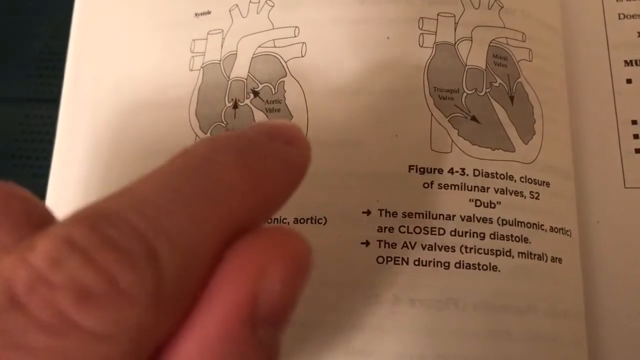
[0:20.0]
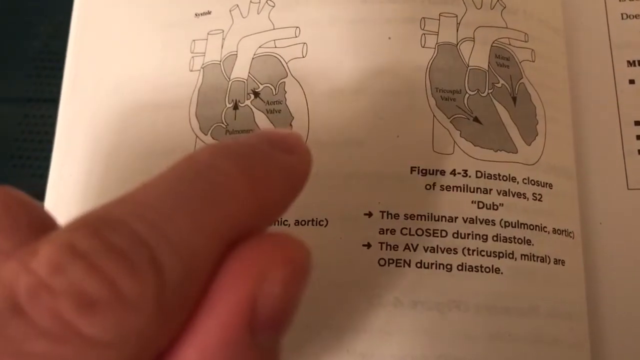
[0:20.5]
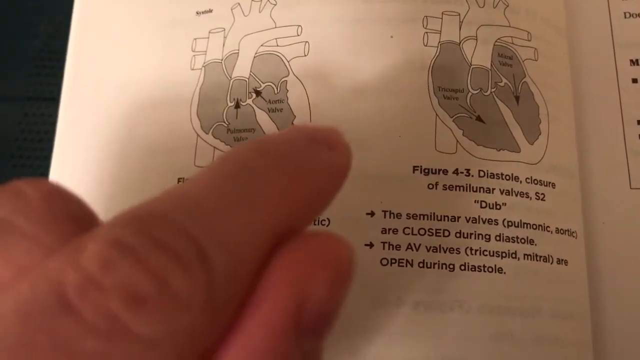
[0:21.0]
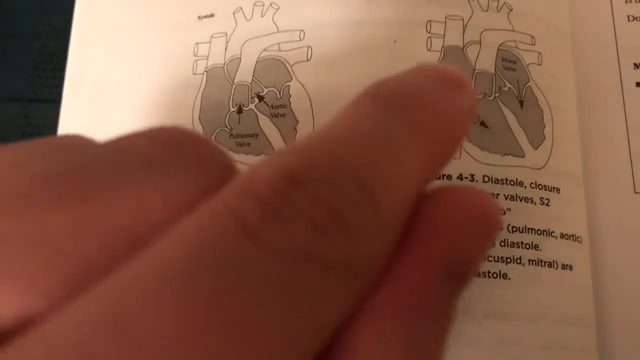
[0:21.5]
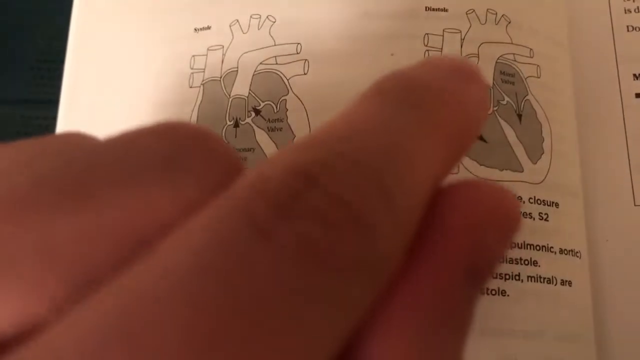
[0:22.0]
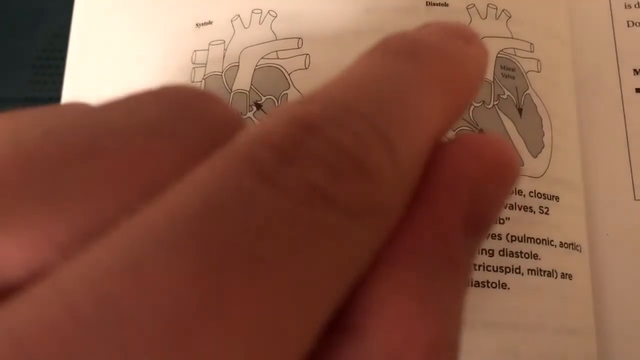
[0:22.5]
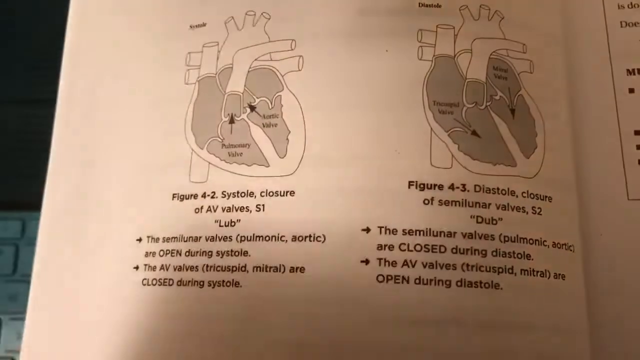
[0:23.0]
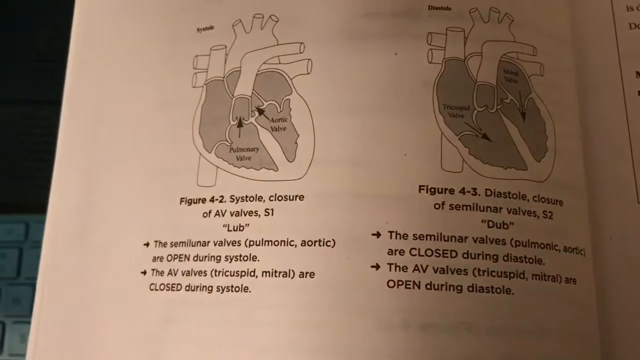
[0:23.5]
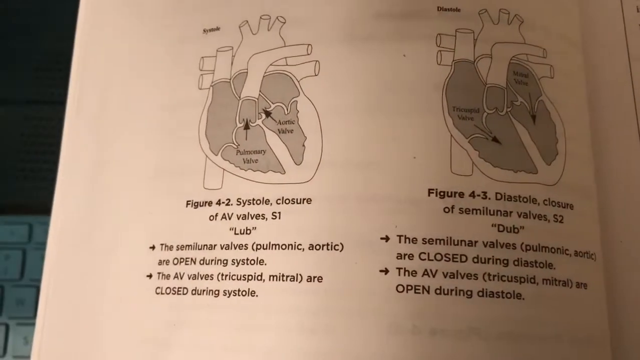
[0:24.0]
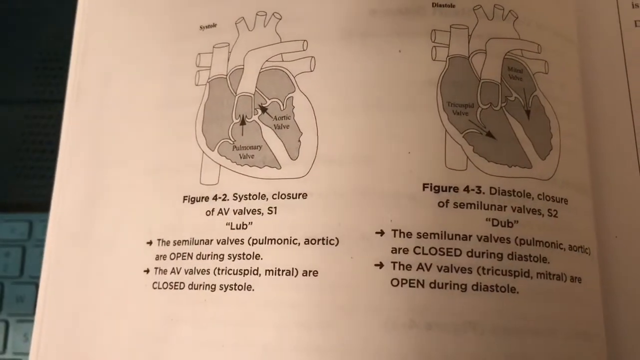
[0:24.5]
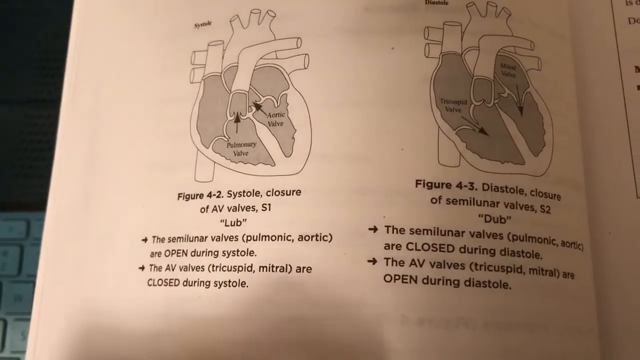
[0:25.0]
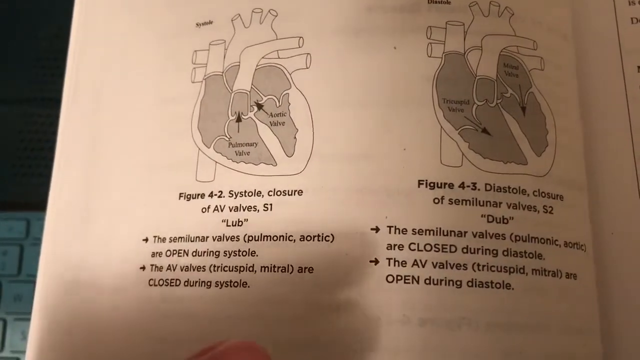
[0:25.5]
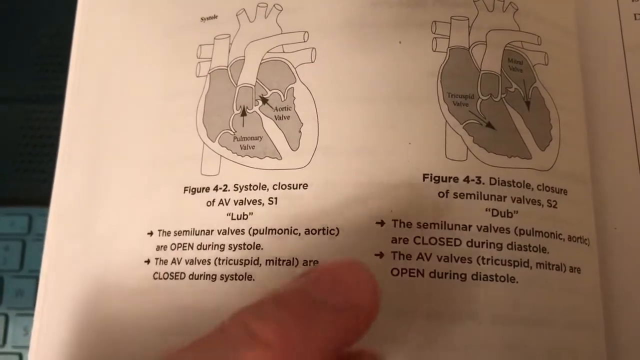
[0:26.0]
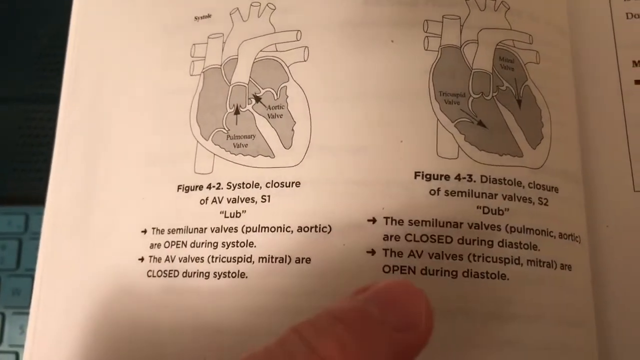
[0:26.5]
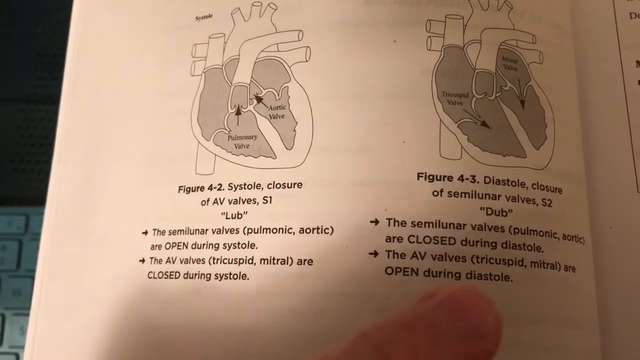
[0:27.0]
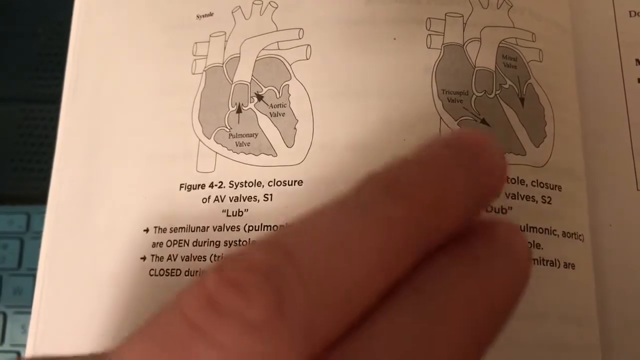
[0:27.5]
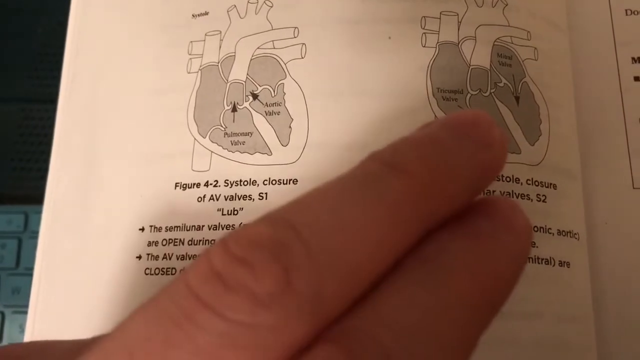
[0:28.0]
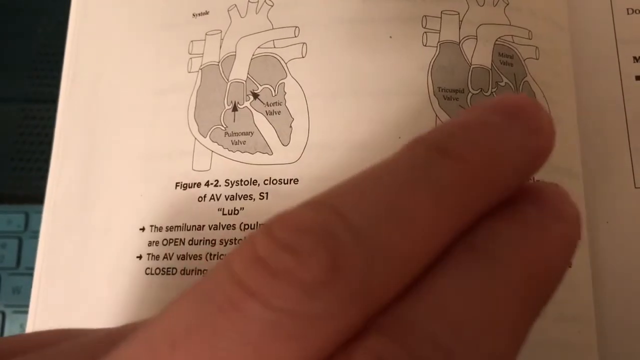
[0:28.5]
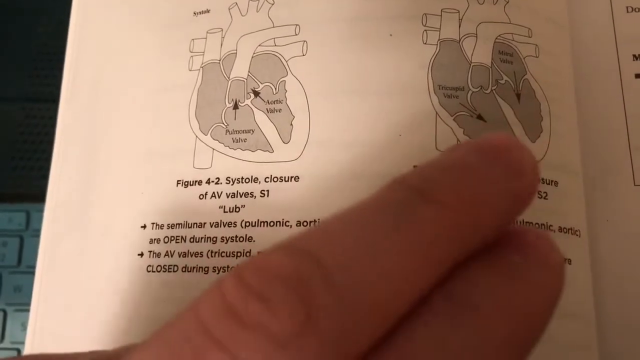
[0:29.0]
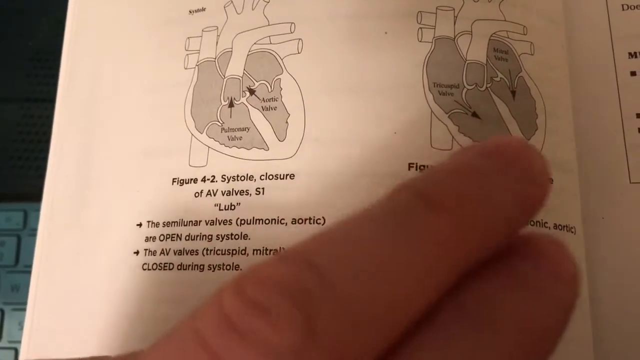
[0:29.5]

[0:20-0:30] The medical book is open, showing two diagrams of cross-sections of a heart, and someone's hand points to the right-hand diagram. Under the left diagram the text reads "figure 4.2. Systole, closure of AV valves S1, LUB. The semilunar valves, pulmonic, aortic are open during systole. The AV valves, tricuspid, mitral are closed during systole." Under the diastole diagram it reads "figure 4.3. Diastole, closures of semilunar valves S2, DUB. The semilunar valves, pulmonic, aortic are closed during diastole. The AV valves, tricuspid, mitral are open during diastole." Arrows in the diagrams point to the valve directions. Someone's finger again appears from the bottom of the screen, pointing to the right-hand cross-section of the heart and to the arrows.